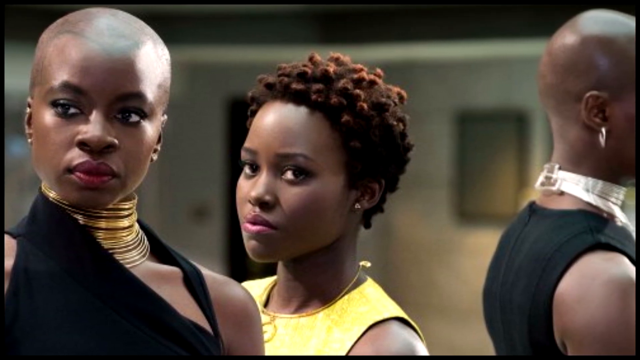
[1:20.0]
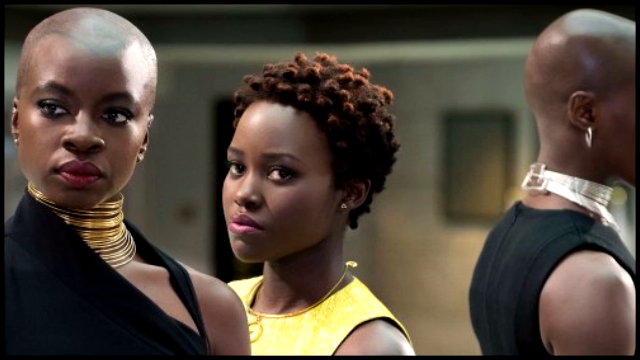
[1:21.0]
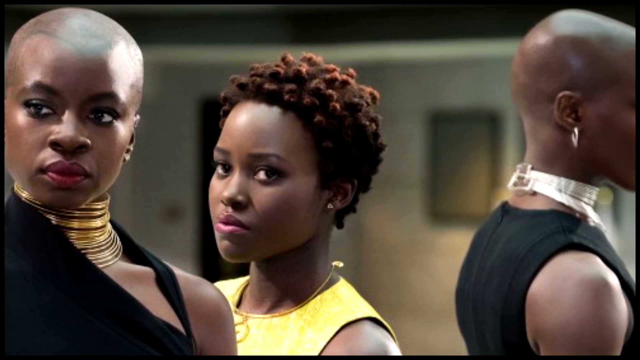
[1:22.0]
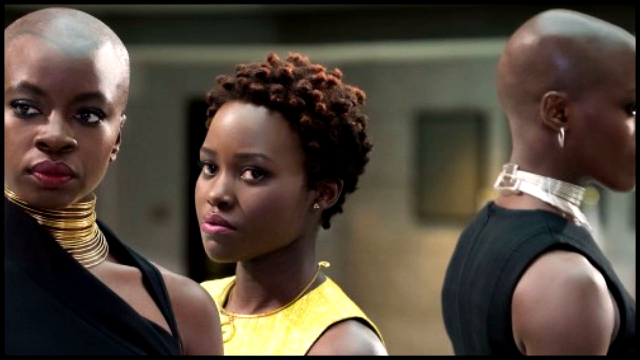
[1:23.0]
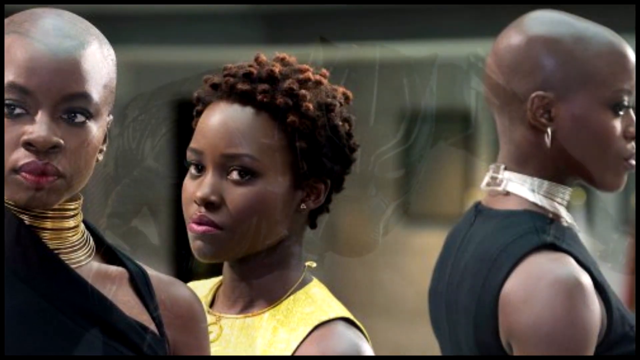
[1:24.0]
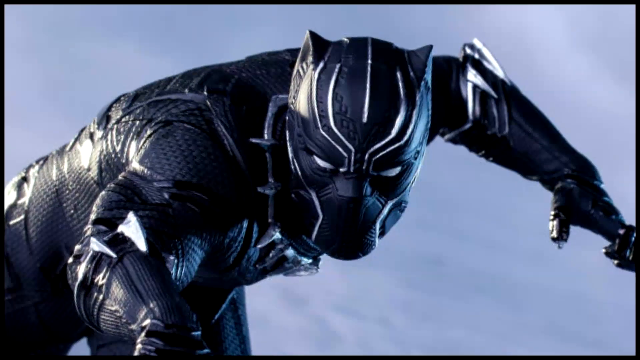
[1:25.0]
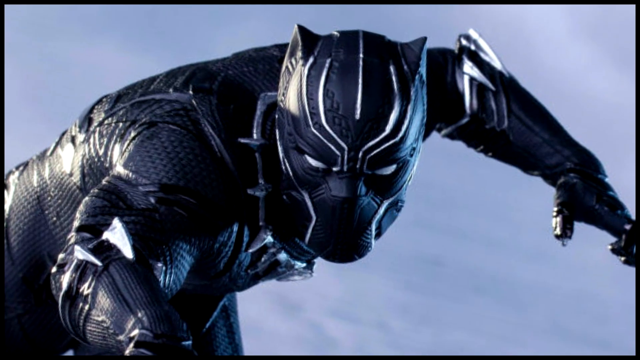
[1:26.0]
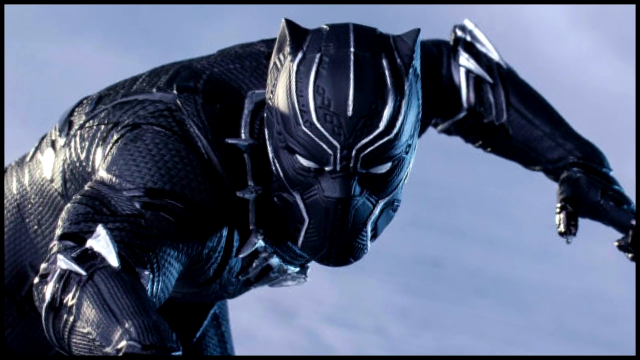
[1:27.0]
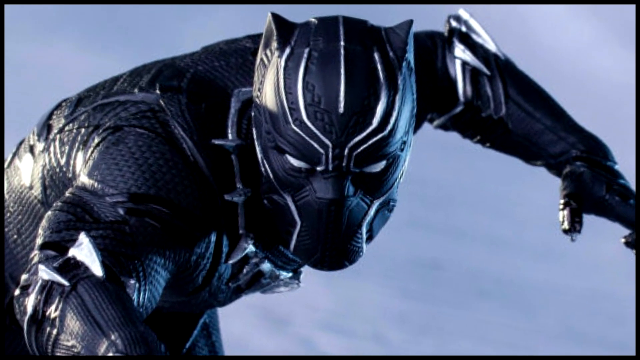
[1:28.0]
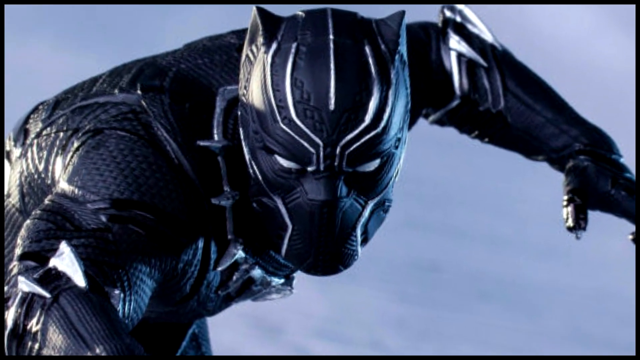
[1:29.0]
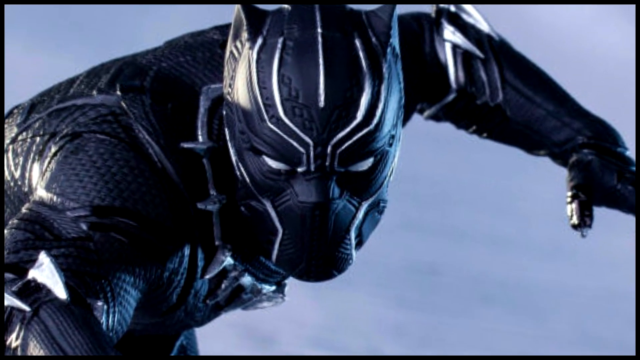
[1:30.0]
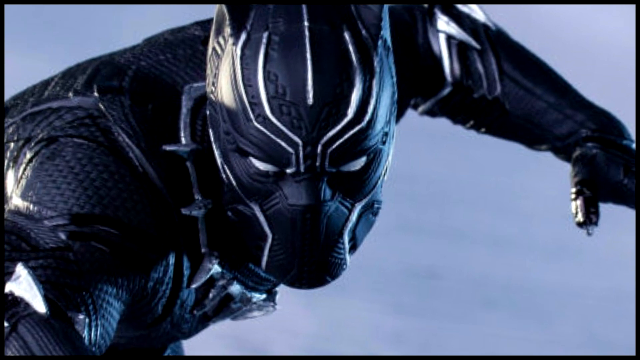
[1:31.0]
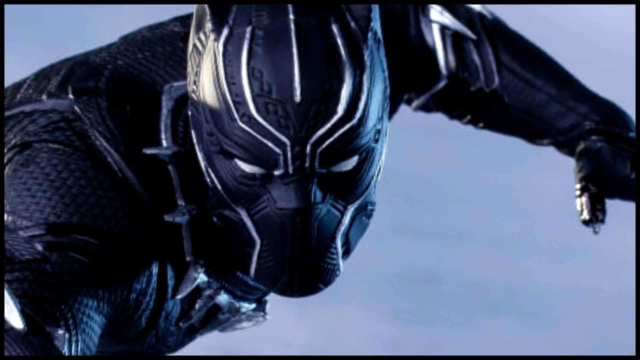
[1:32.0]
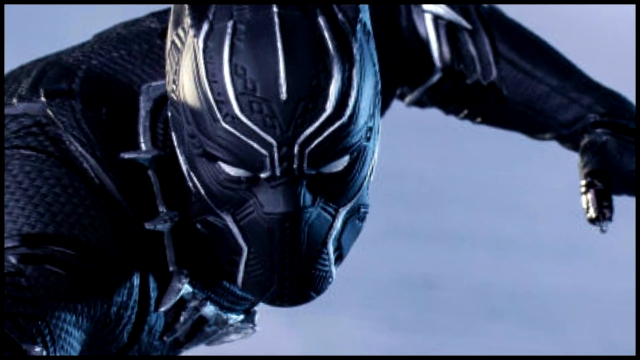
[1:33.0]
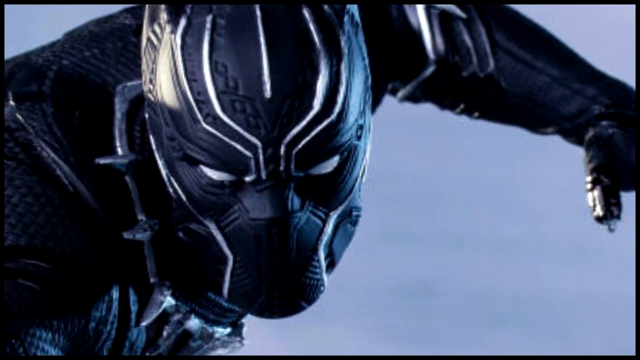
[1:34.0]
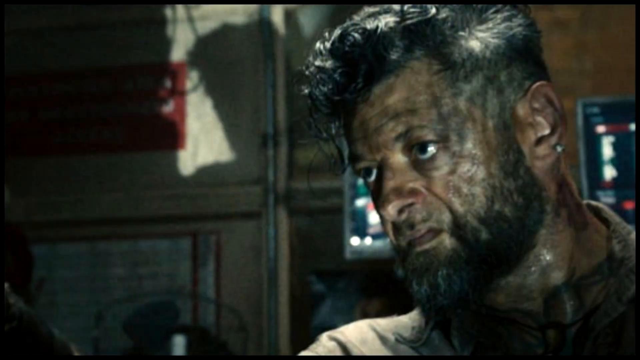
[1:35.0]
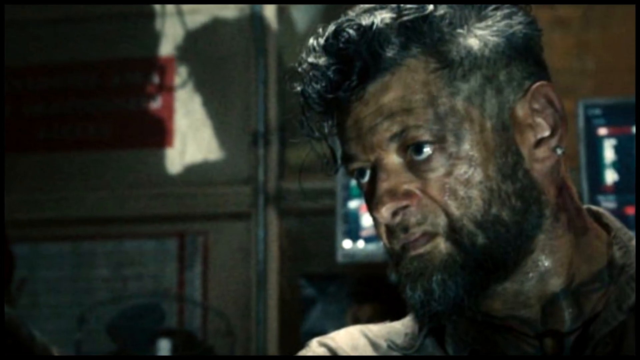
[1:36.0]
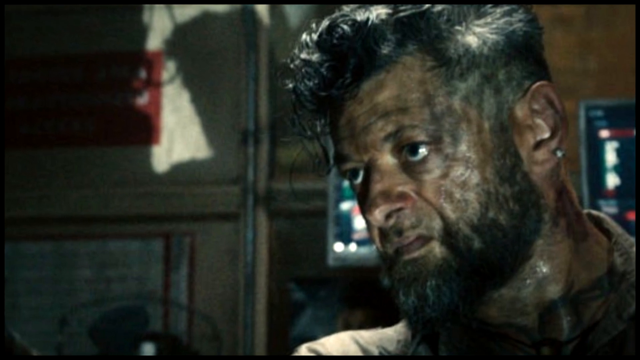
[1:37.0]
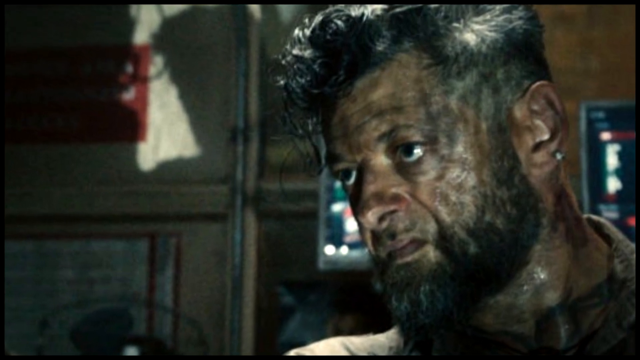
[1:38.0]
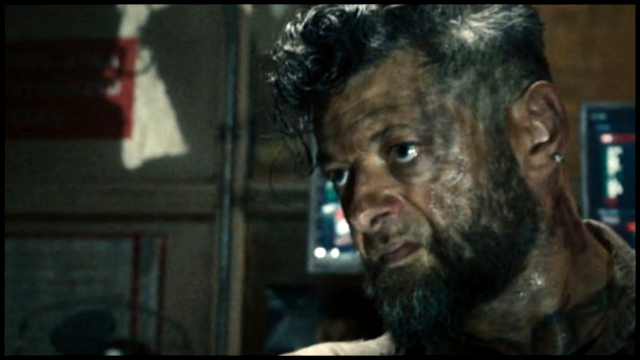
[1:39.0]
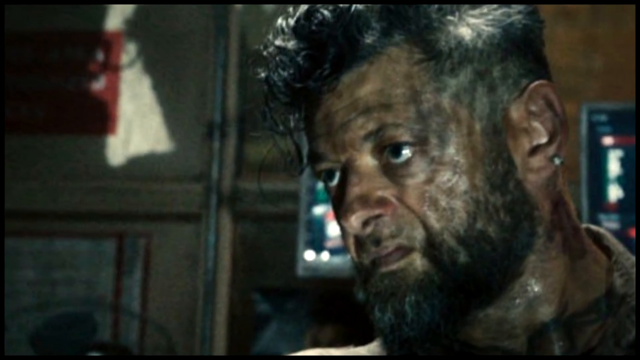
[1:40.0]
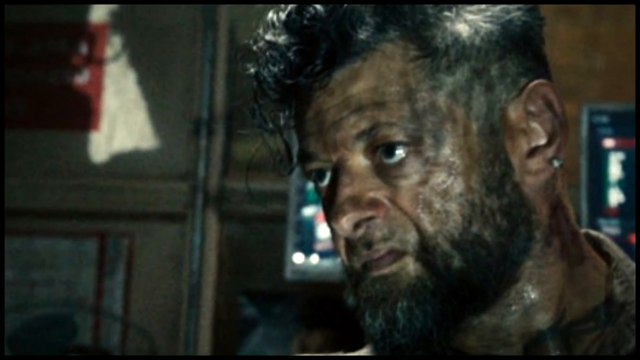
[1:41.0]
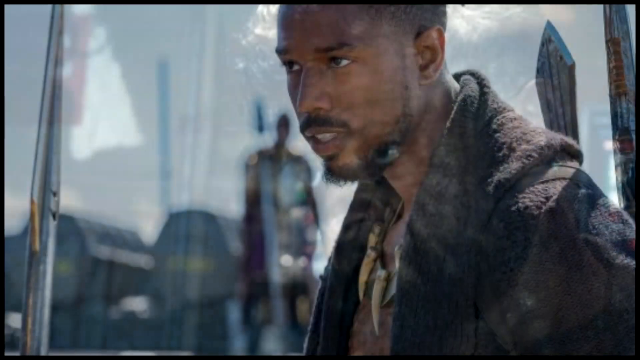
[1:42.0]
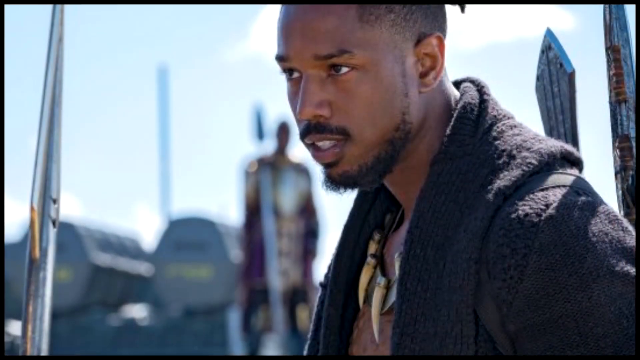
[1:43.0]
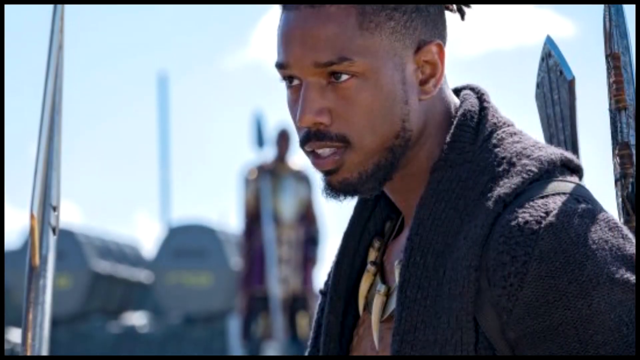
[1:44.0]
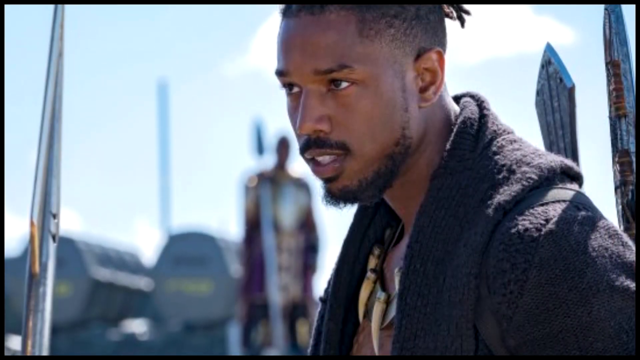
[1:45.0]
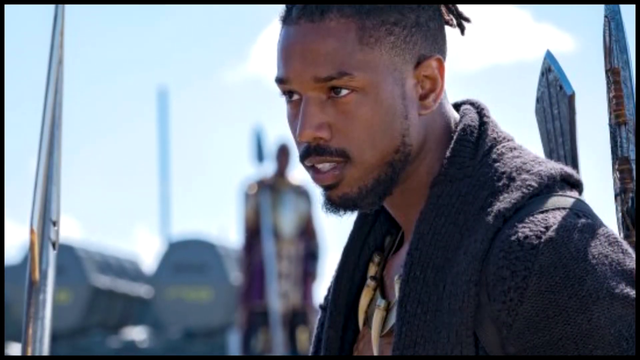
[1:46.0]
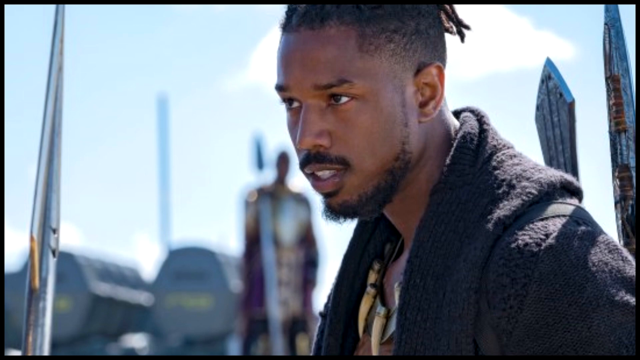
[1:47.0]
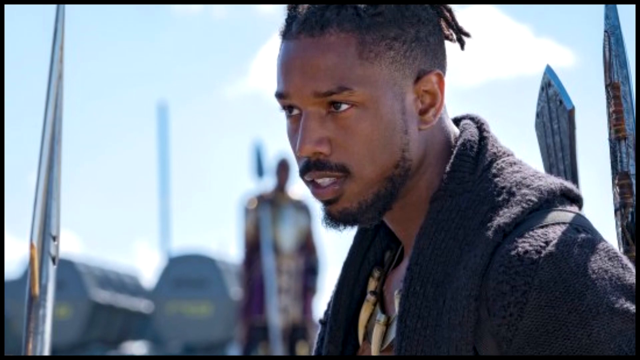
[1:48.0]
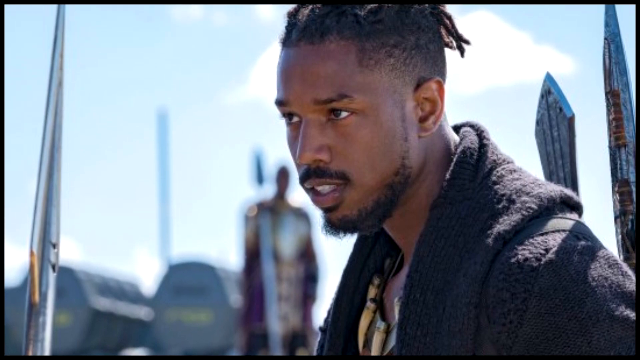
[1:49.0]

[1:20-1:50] Two women appear. One is Black with shaved hair and looks to her right. She wears stacks of gold necklaces around her neck, red lipstick, eye makeup and a black geometric shirt that shows off her shoulders. Next to her is another Black woman wearing a yellow sleeveless shirt and a necklace, looking at the camera to the left. Her reddish-brown hair is in small knots around her head. Behind them is the reflection of the first woman, so they appear to be near a mirror. Then a picture shows the Black Panther looking ready to attack the camera, claws coming out of his raised right hand, his left hand pulled back slightly in a clenched stance. He wears a mask with pointed ears and is hunched over. Silver or gray lines on the mask articulate the patterns on his head, and his white eyes leer. Long gloves cover his arms, and his back is slightly hunched. He is against a periwinkle background. The camera then zooms in on the Black Panther's face, and the image shows a man who looks sweaty, tired and a little ragged, looking off to the left of the screen. His shadow falls on the door behind him, and he seems to be in a dingy room. He has a dark beard, dark hair and big dark eyes with visible whites. There is what might be dirt on his face, an earring in his ear, and his neck is sweaty.